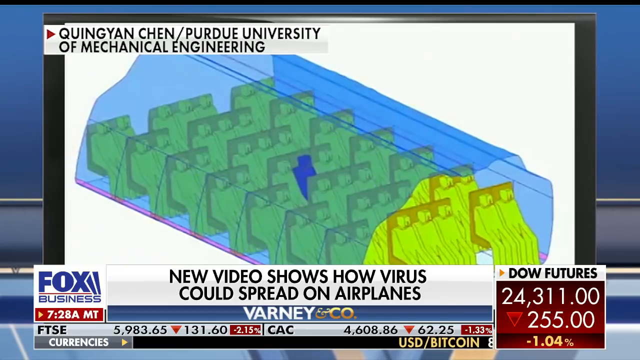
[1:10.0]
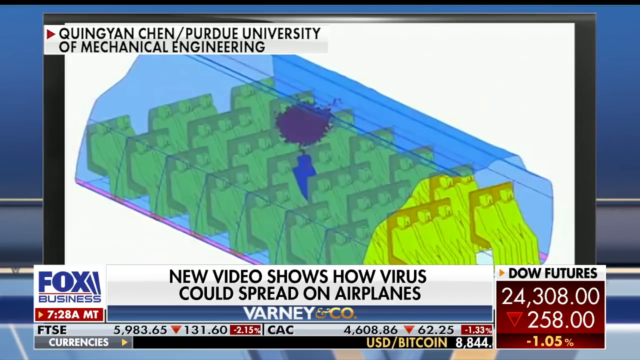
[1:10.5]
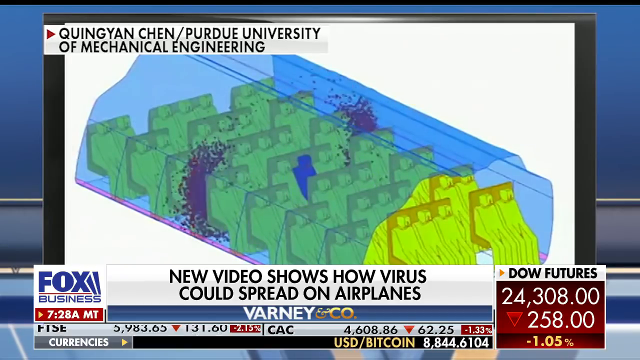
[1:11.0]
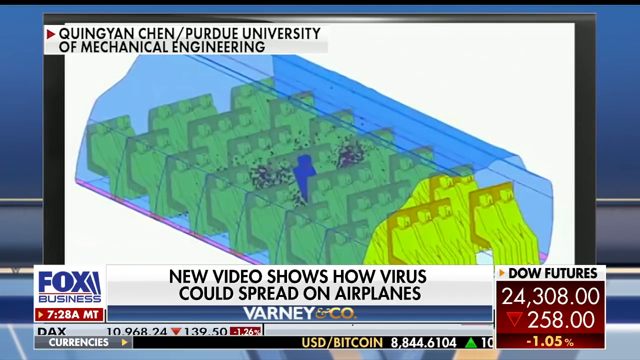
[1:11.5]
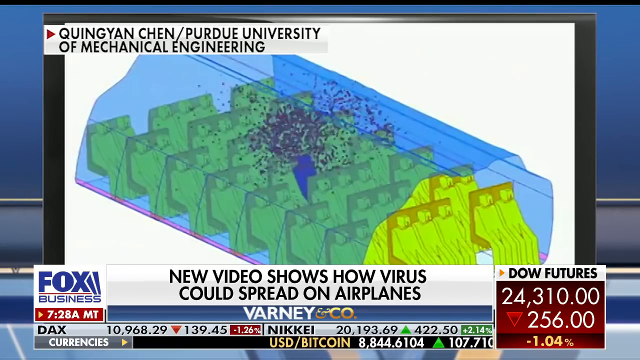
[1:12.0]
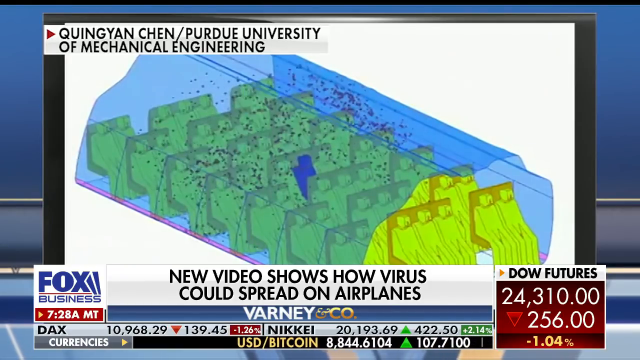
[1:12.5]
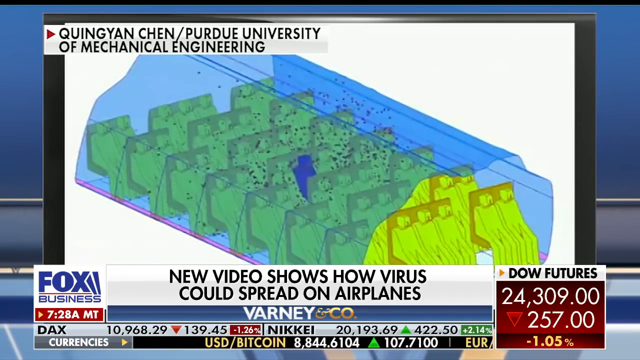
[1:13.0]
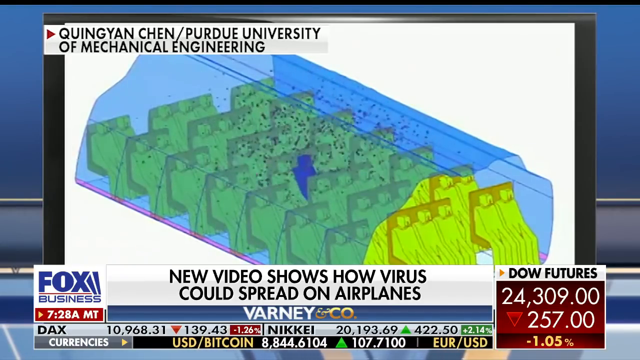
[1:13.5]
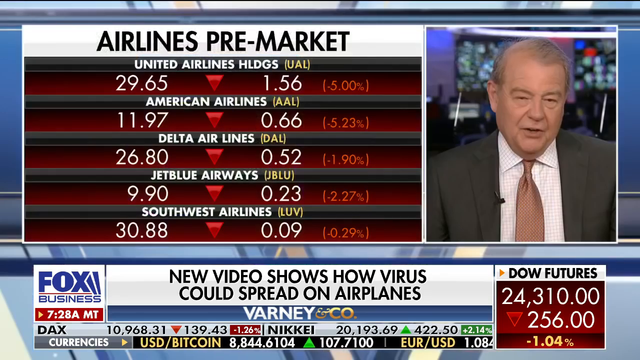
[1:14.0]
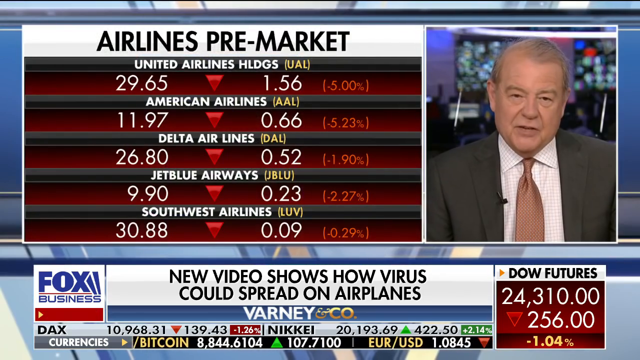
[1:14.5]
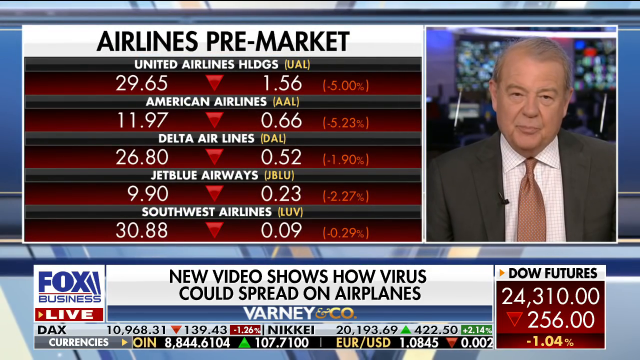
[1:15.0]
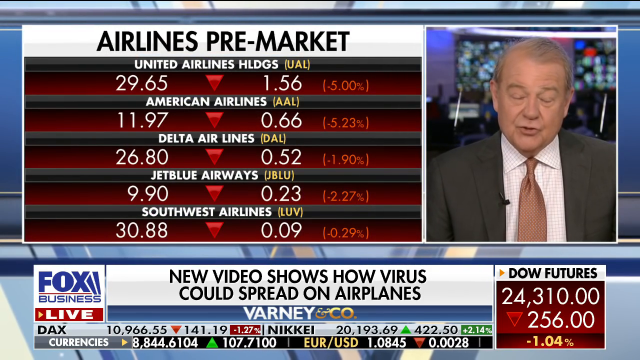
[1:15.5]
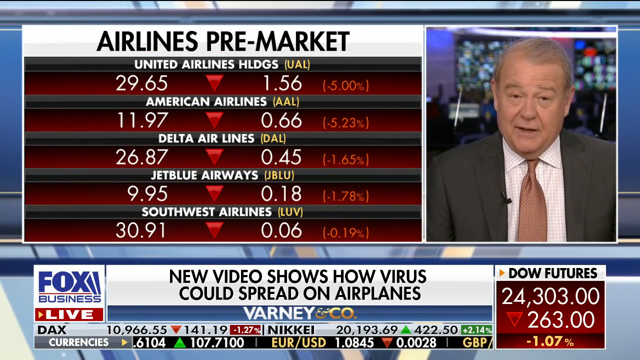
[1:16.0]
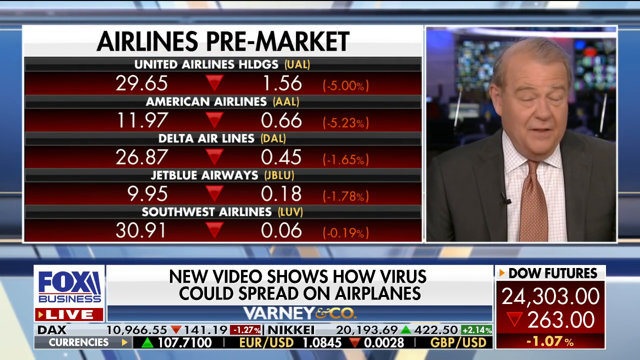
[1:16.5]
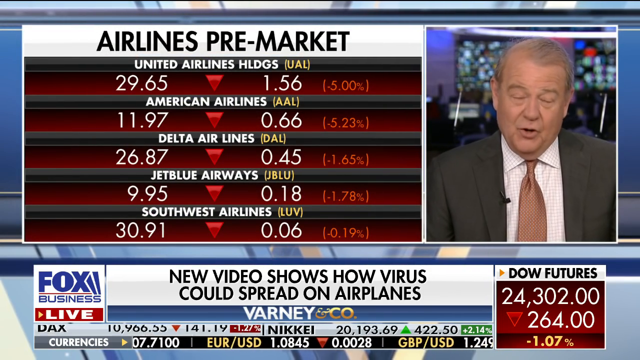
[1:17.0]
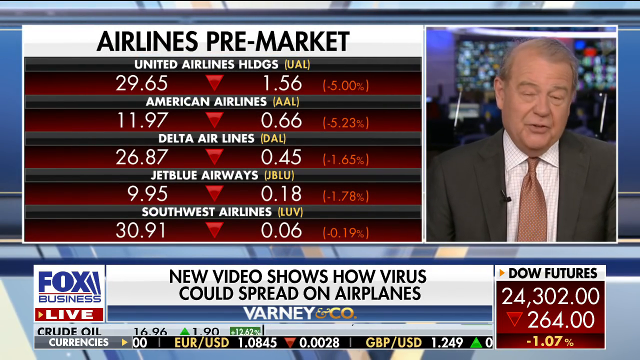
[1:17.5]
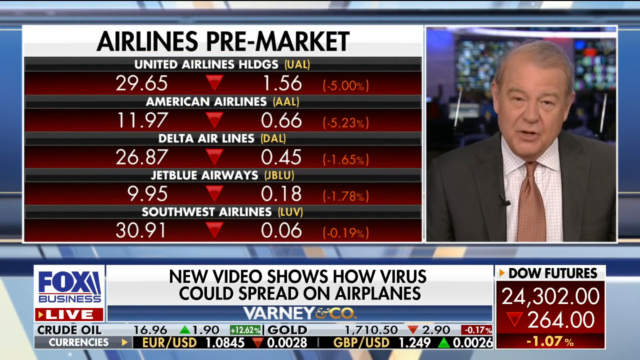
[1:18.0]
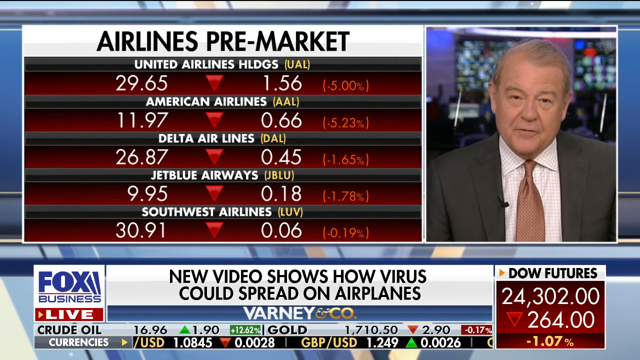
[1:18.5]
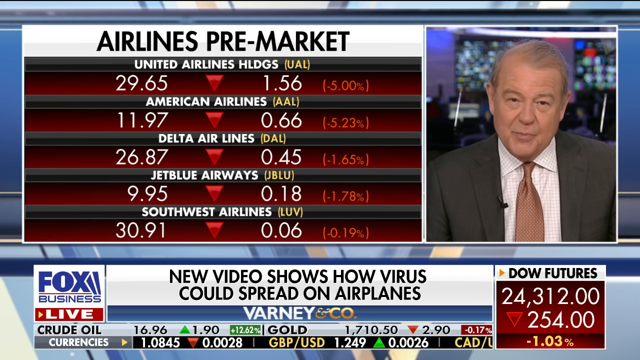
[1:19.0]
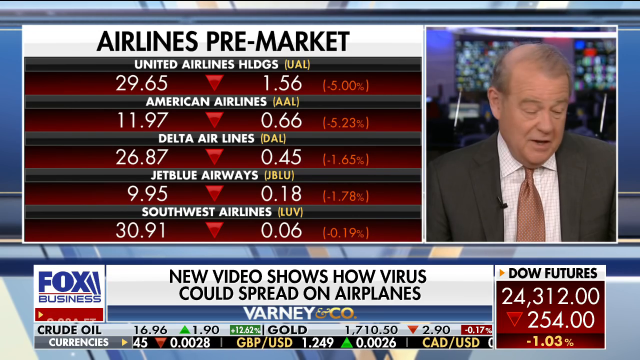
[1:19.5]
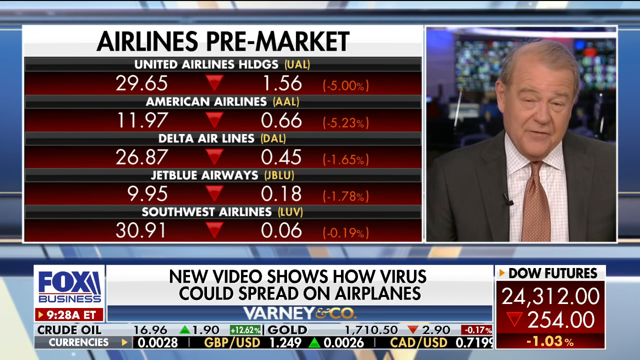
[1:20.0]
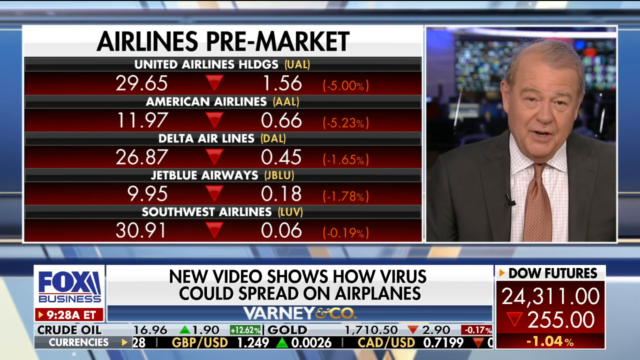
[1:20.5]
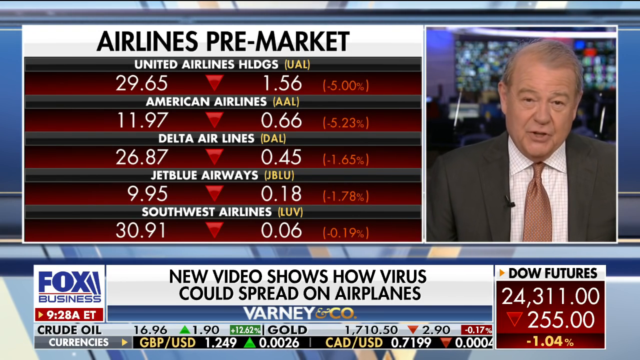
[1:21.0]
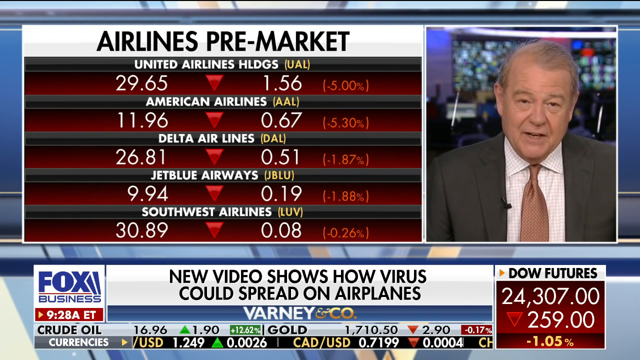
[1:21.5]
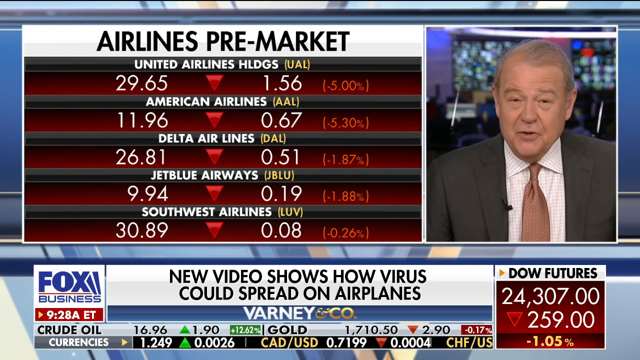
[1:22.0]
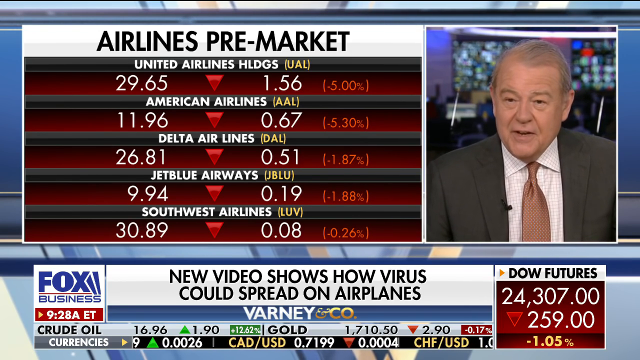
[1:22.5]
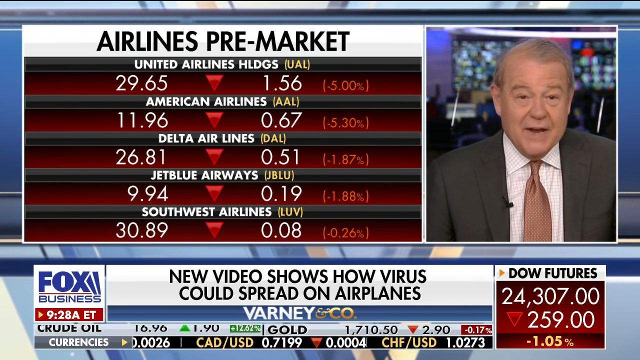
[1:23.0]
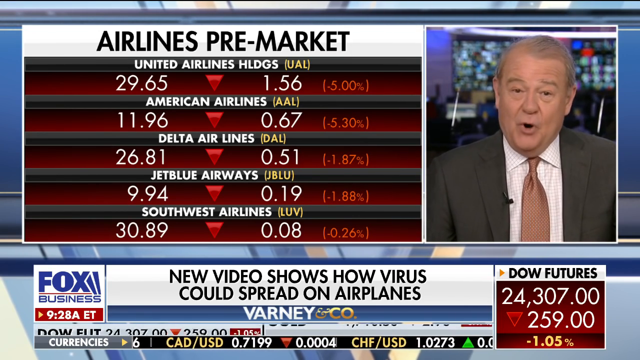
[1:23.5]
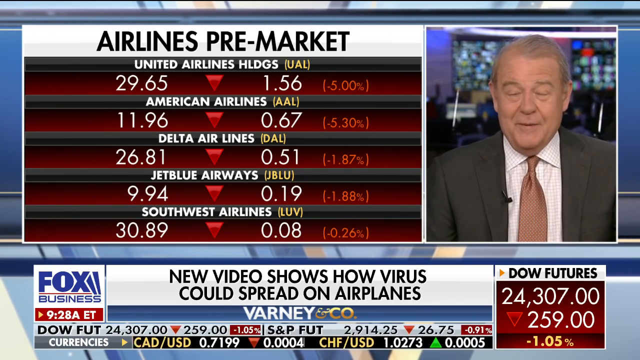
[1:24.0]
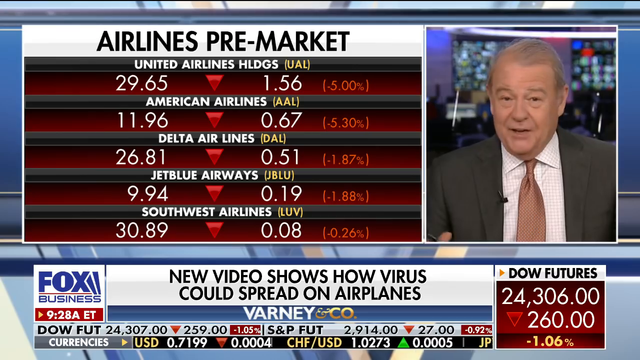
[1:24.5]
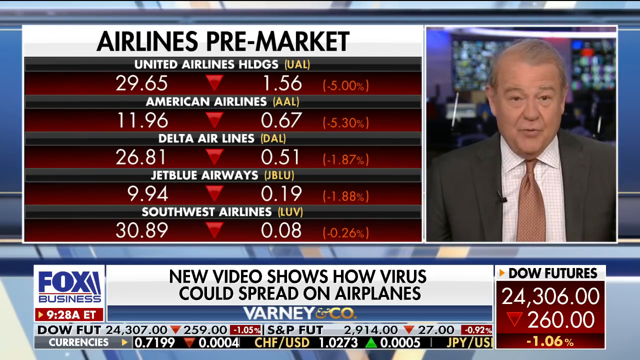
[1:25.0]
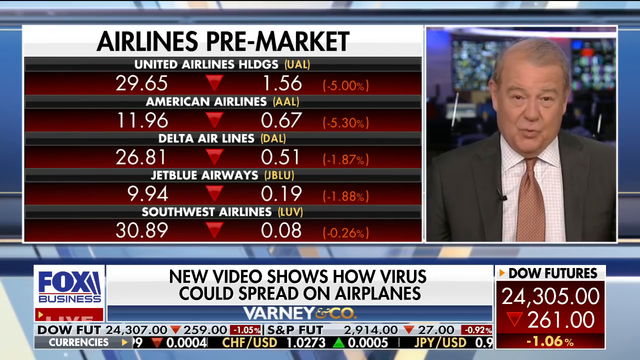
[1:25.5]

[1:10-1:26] The view pans back to the Airlines Pre-Market chart along with a video insert of the Fox Business News studio. The person in the insert is the older news anchor, who is talking, shaking his head a little, and looking at something on his desk. He reads some things off his desk, but for the most part he speaks impromptu rather than reading from a teleprompter. The chart on the left, titled "Airlines Pre-Market," shows updated values: United Airlines Holdings at 29.65, down 5%; American Airlines at 11.96, down 5.30%; Delta Airlines at 26.81, down 1.87%; JetBlue Airlines at 9.94, down 1.88%; and Southwest Airlines at 30.89, down 0.26%. The marquee also shows the Dow Futures at 24,306, down 260 points. The segment is from the Fox Business show Varney & Company.